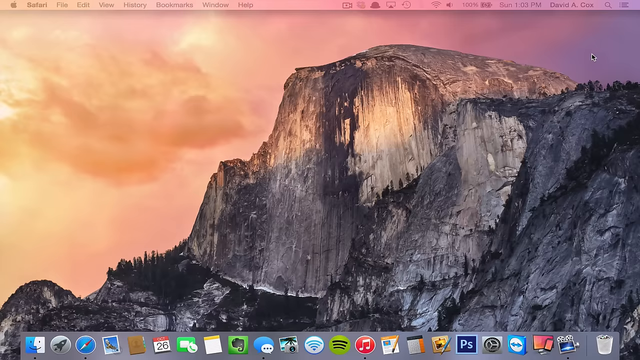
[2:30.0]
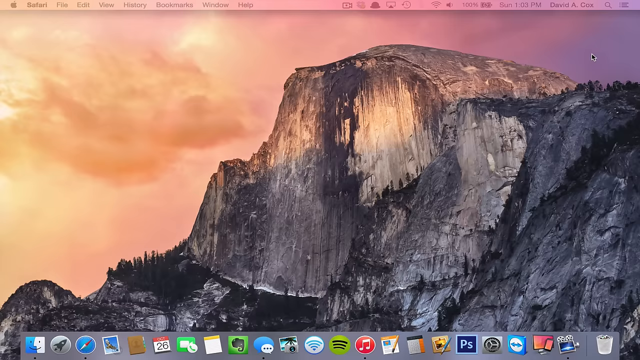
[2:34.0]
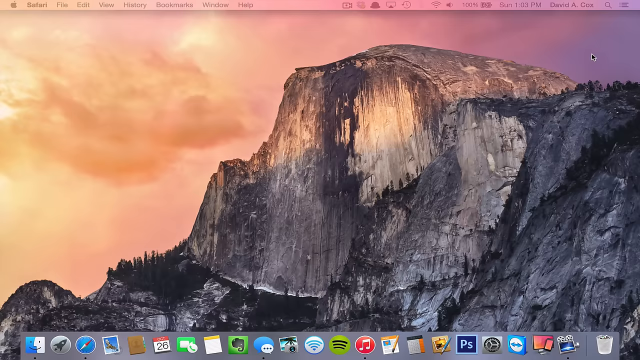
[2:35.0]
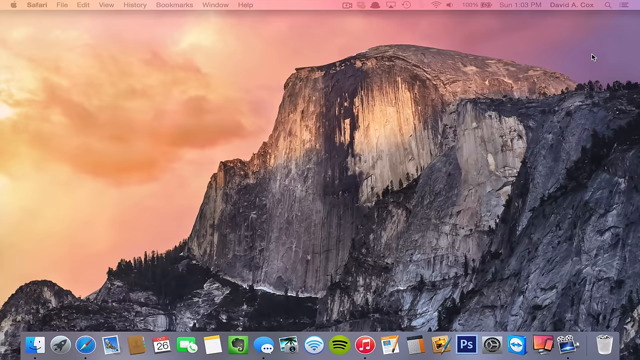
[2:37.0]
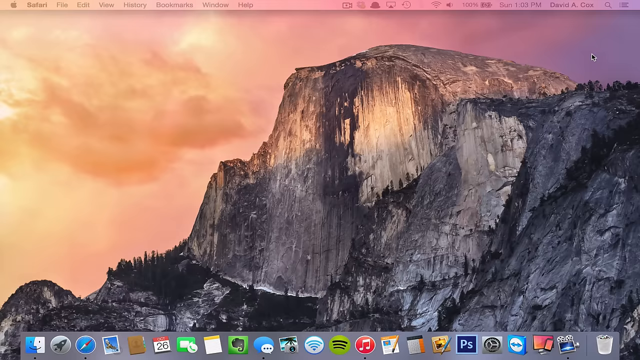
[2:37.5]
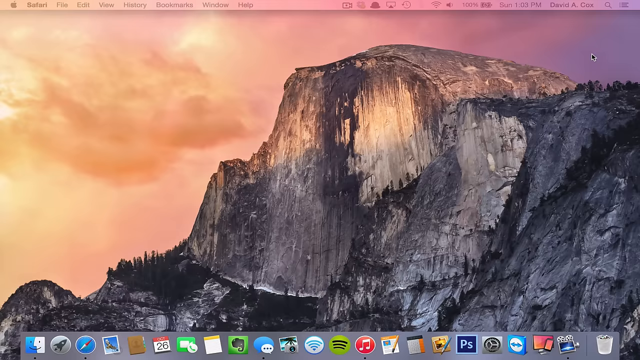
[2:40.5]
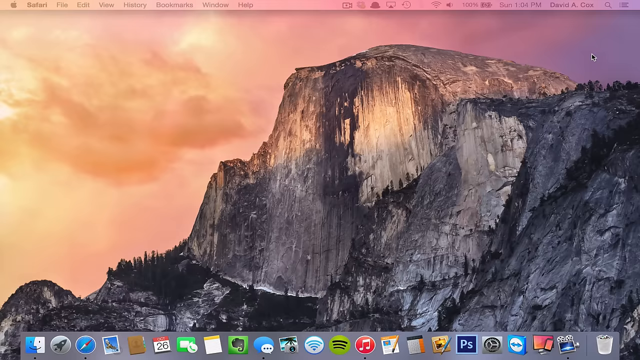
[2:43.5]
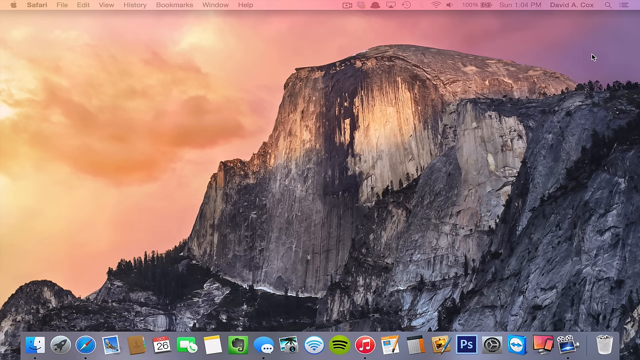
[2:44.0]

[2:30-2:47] The mountain face is shown, looking like a still picture, with the sky unchanged. The top of the mountain is rounded and looks quite smooth. Along the very bottom, apps appear and cover the whole bottom of the screen, flashing on and off so they are hard to see. Among them are the calendar, notes, a signal icon, a wastepaper basket, FaceTime, which pops out, a rocket ship and an elephant's head. The writing all appears to be in English.